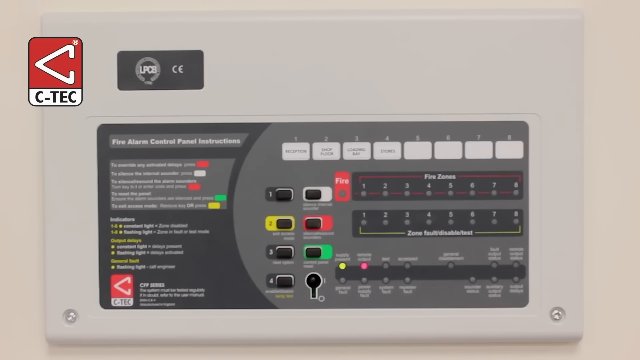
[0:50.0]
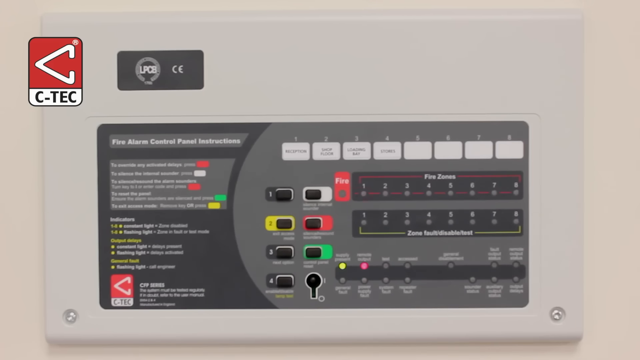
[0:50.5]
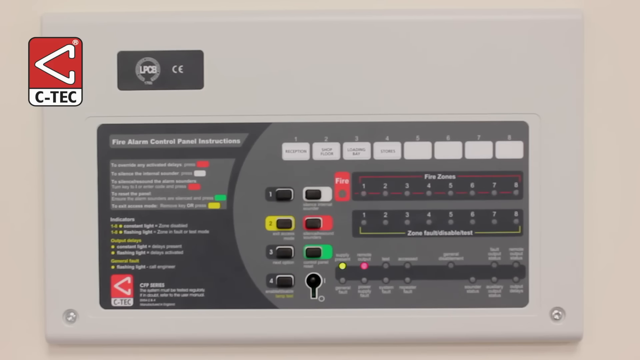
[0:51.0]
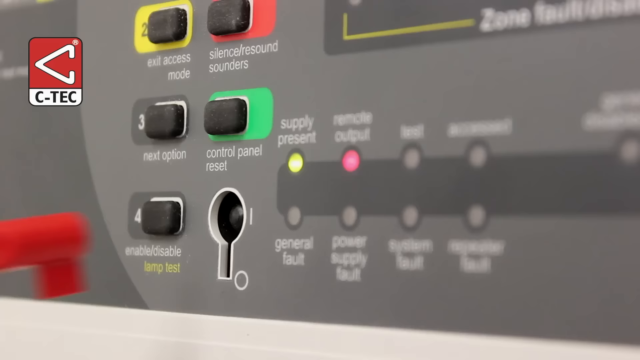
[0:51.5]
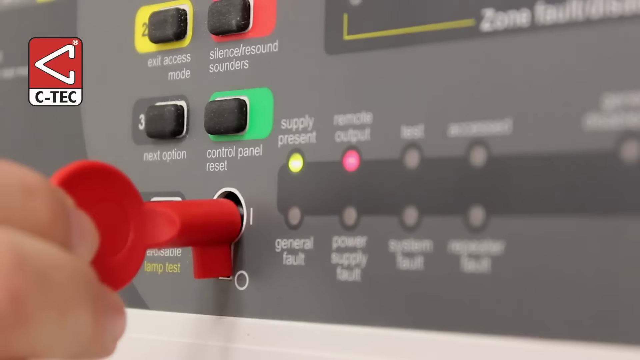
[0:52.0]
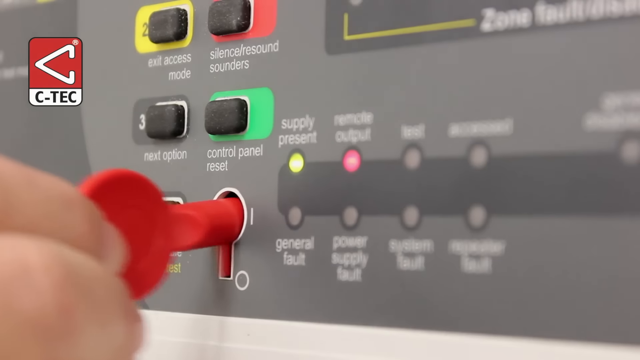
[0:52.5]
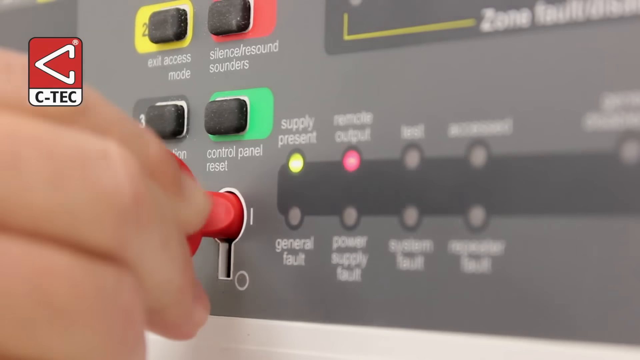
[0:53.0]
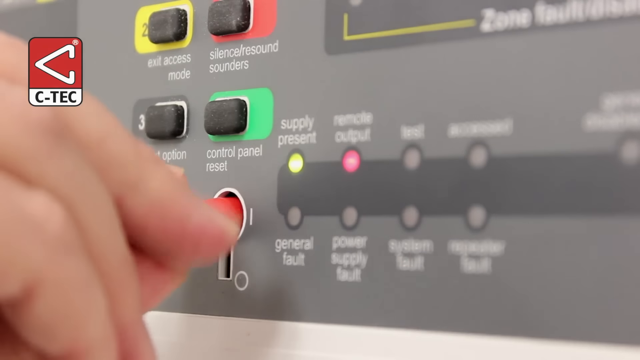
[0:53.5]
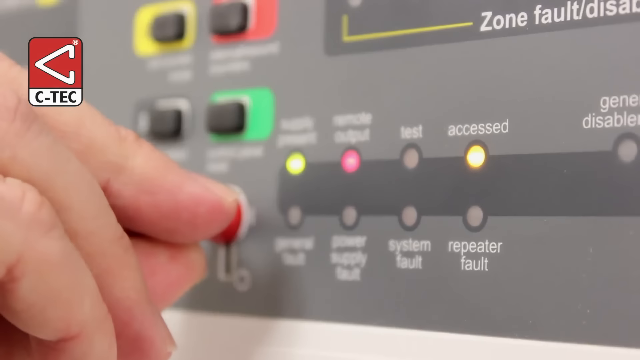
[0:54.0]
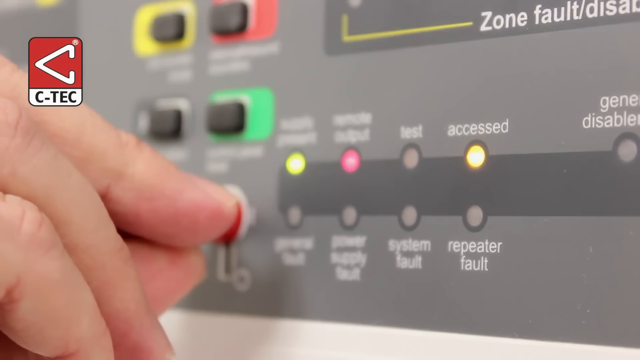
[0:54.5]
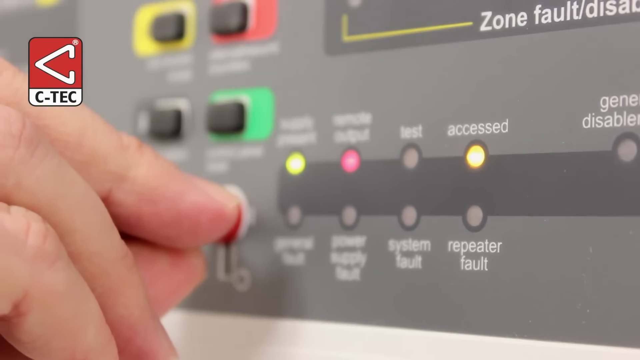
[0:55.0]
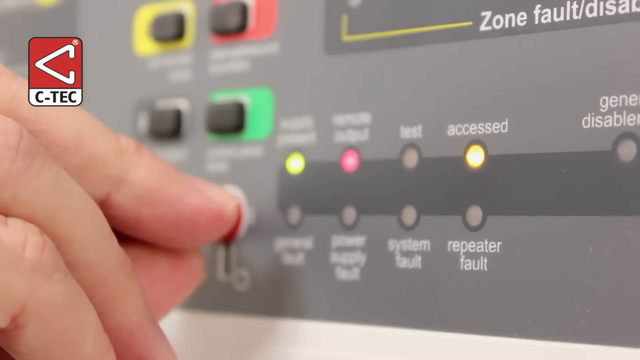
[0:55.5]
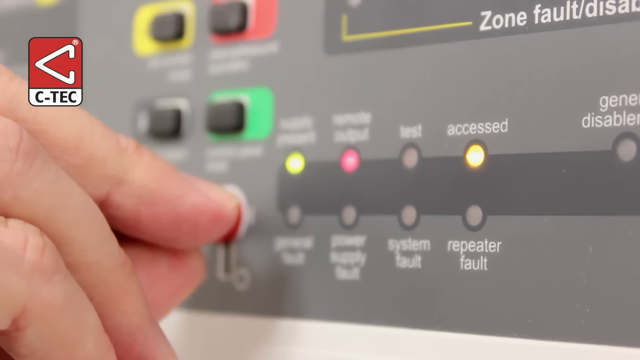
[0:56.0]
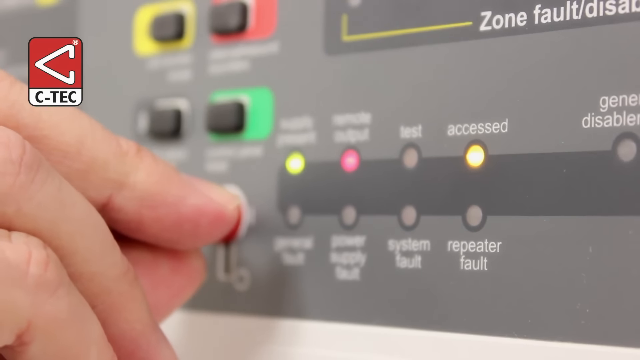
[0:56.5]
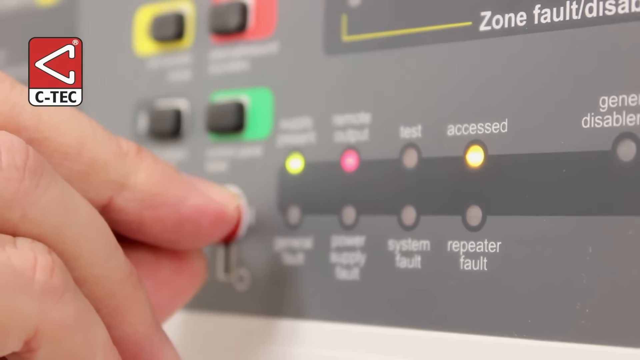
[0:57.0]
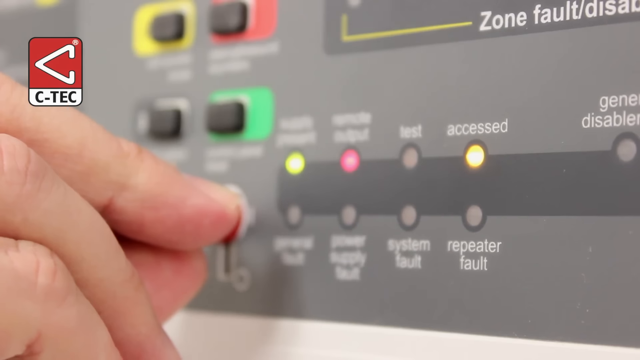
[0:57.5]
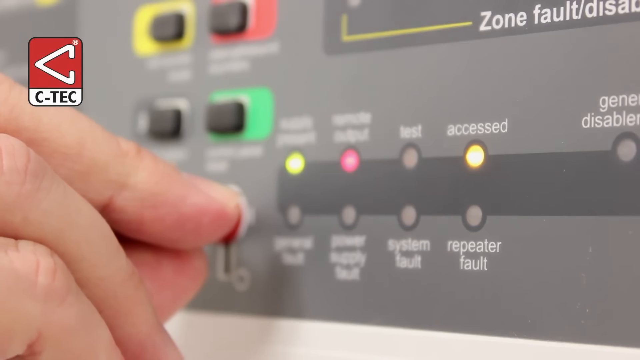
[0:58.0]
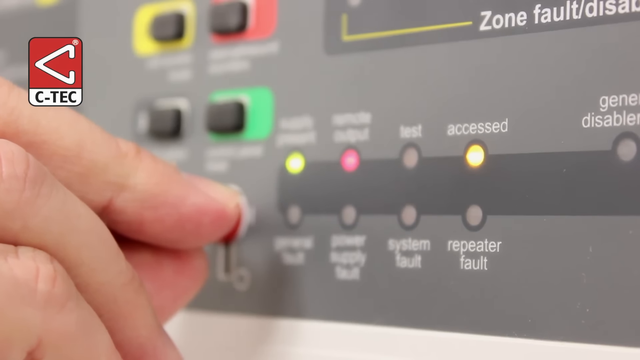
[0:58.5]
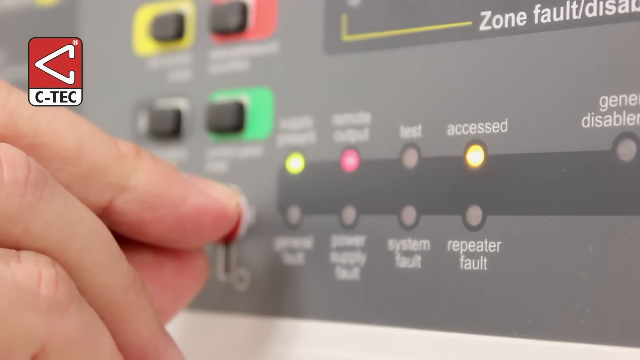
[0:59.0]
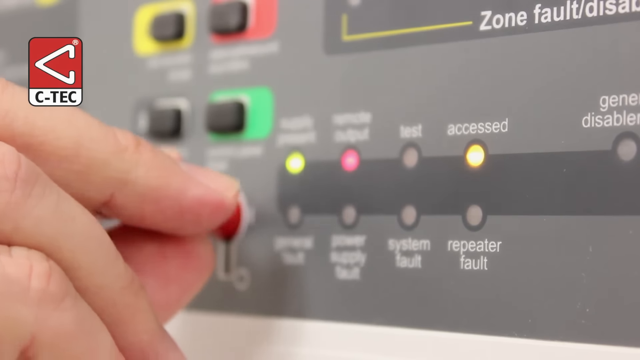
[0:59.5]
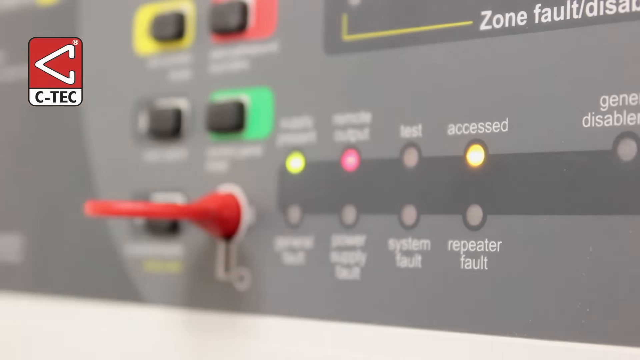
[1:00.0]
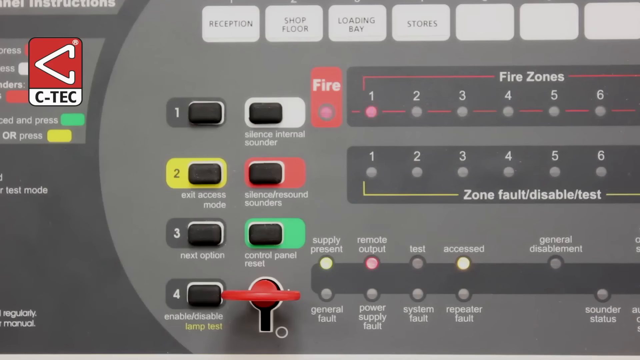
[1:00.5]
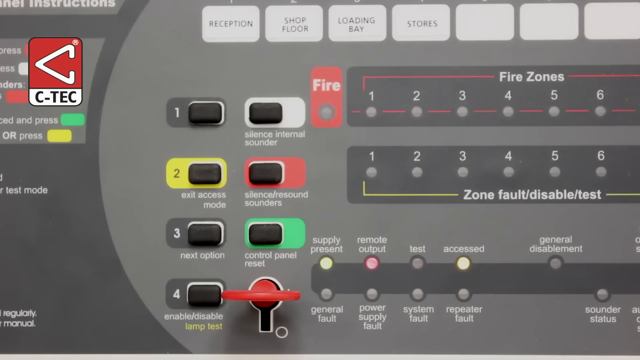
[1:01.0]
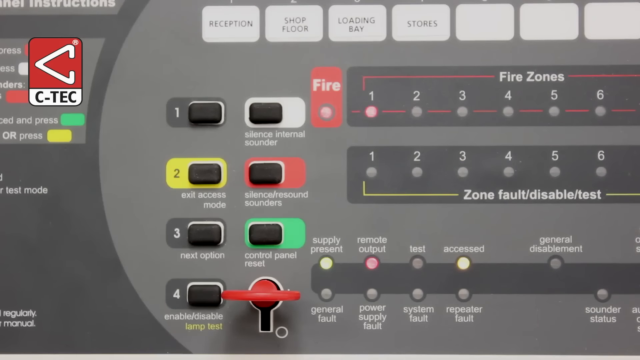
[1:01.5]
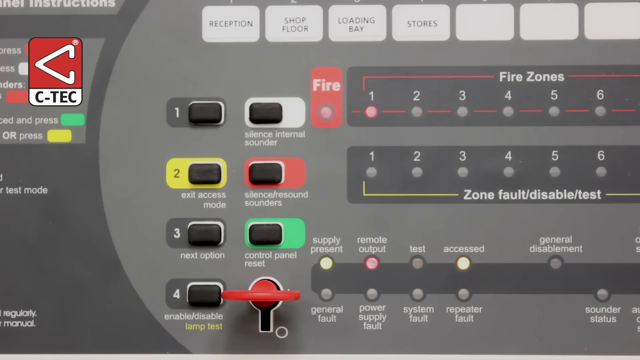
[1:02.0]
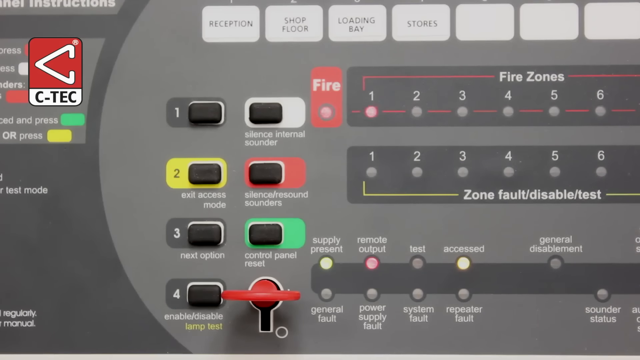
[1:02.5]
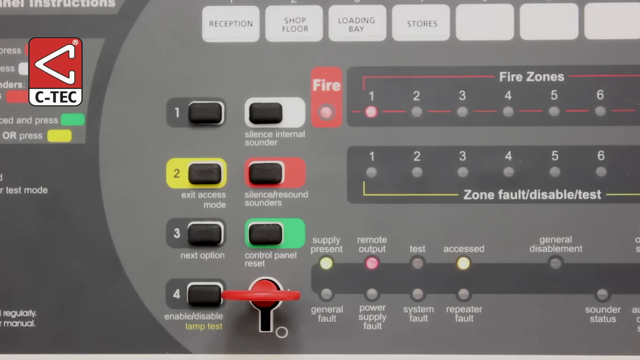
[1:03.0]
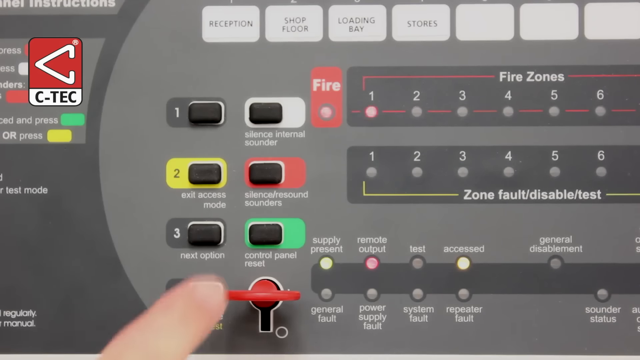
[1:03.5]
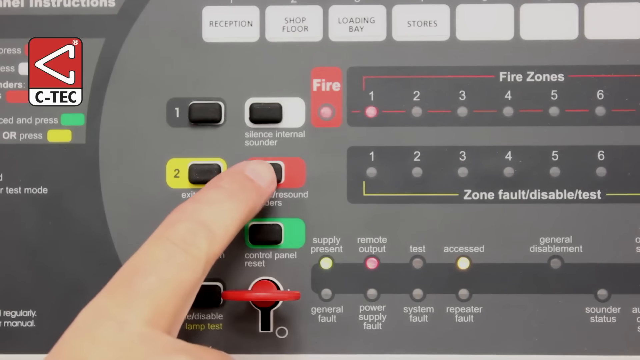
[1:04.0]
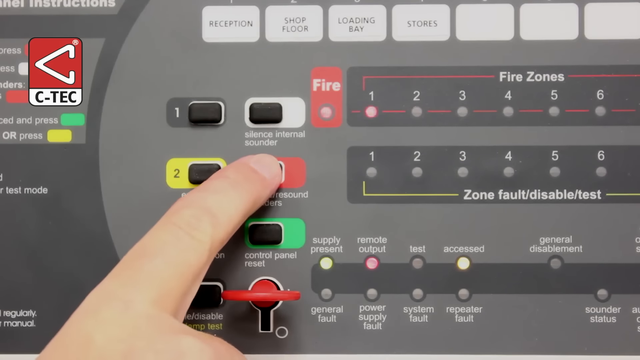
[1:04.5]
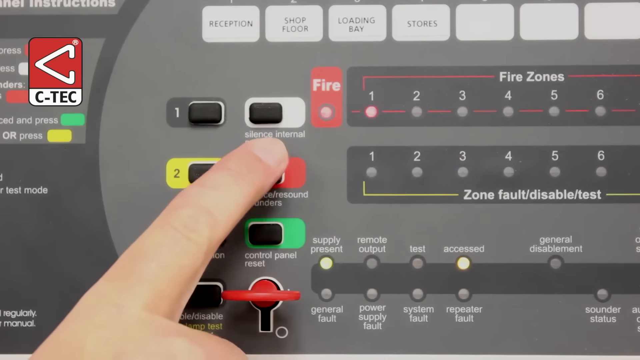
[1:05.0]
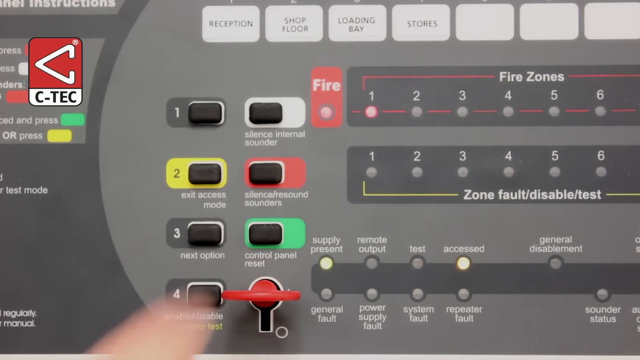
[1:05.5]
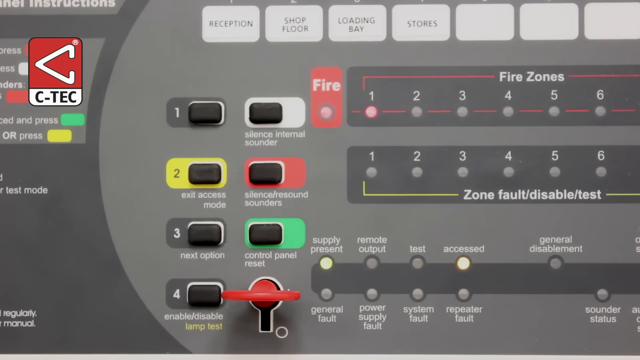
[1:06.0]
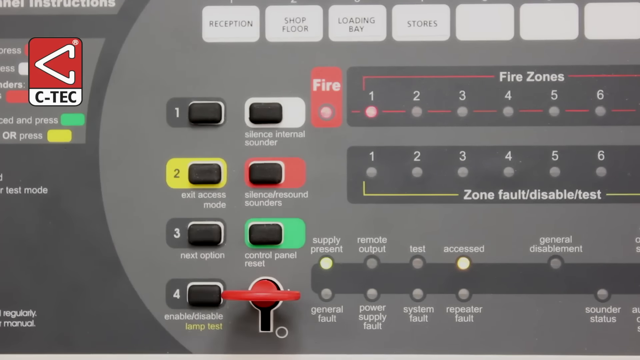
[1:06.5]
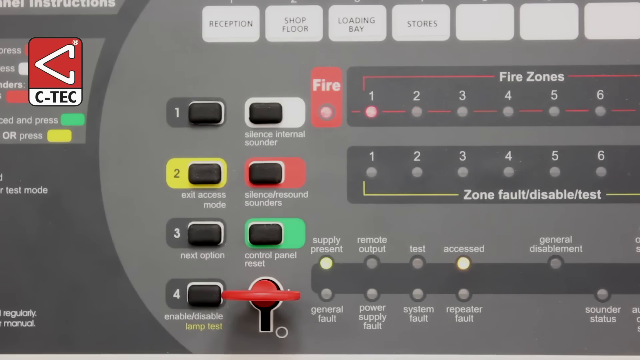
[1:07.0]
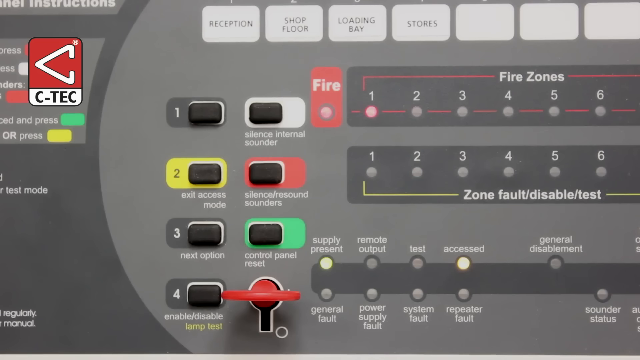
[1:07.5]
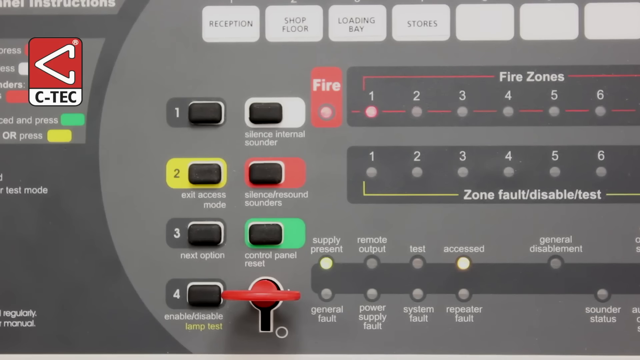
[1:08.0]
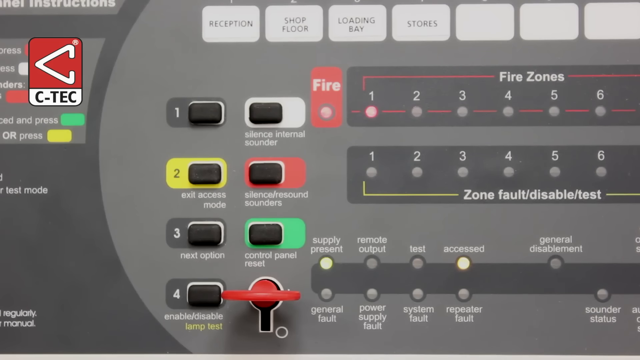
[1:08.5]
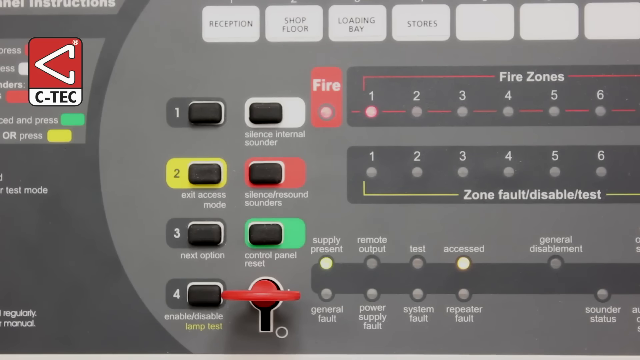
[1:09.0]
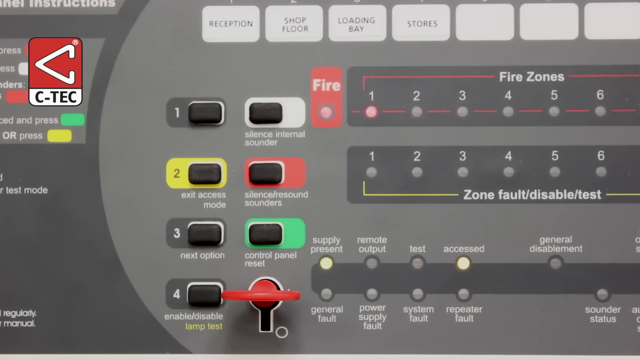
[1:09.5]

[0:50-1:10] The zoomed-out view of the control panel shows the two lights at the top still flashing red while the lights at the bottom stay a consistent green and red. The video zooms to the bottom section of the panel, where the supply present and output lights are still lit. A man's hand appears in the bottom left corner of the screen holding a red key, which he puts into the keyhole on the control panel and turns anticlockwise. This makes the option that says "accessed", to the right of the remote output light, turn orange. He holds the key in the anticlockwise position at nine o'clock, then takes his hand off it so only the key in the lock is visible. A more zoomed-out shot shows the fire zones still flashing with the fire and zone one lights, while supply present, remote output and accessed all show coloured lights. The man's finger then presses "silence and resound sounders", which makes the red remote output light go out.